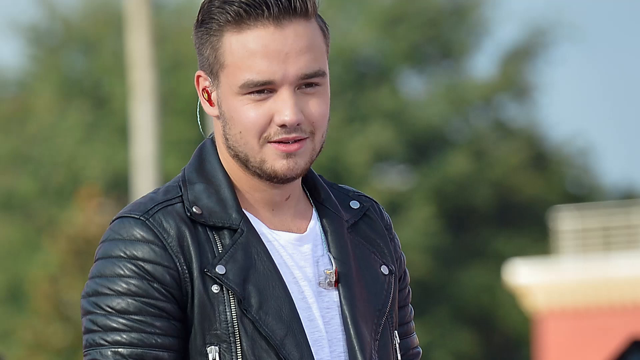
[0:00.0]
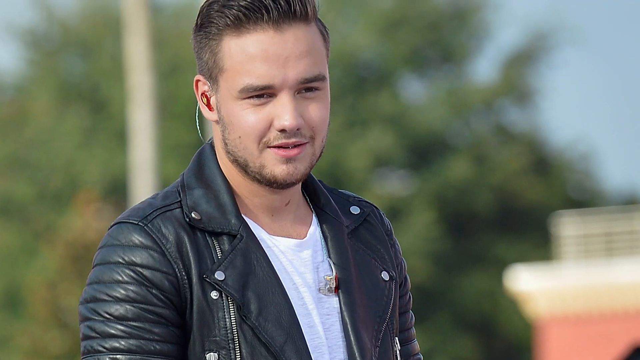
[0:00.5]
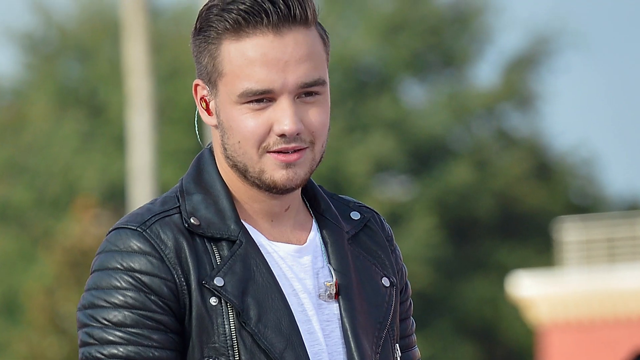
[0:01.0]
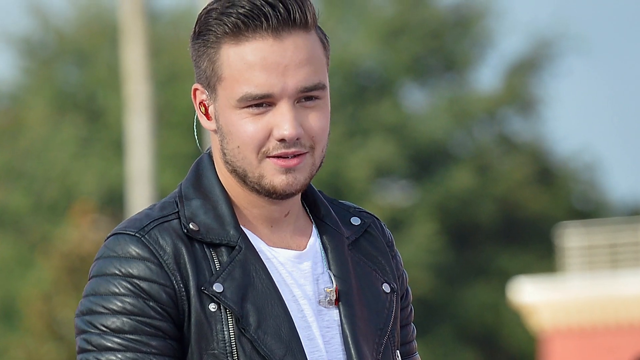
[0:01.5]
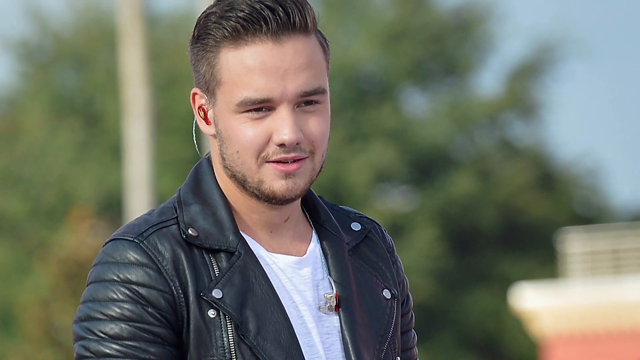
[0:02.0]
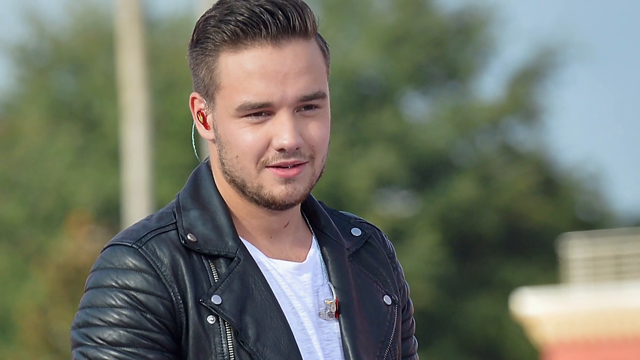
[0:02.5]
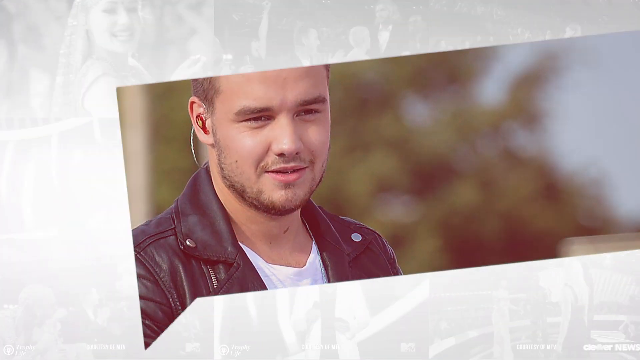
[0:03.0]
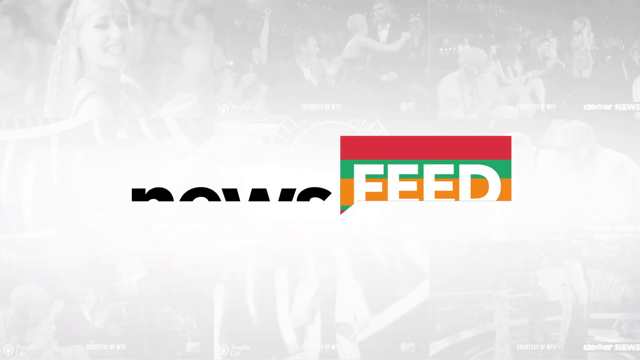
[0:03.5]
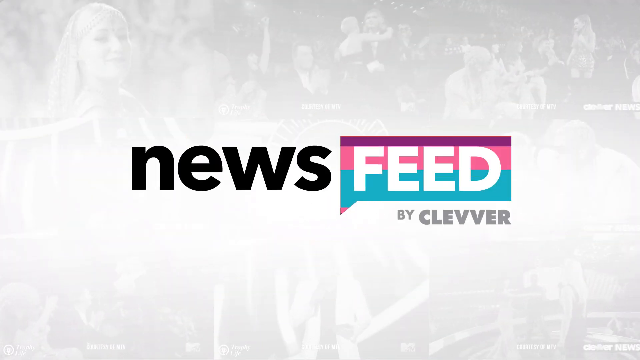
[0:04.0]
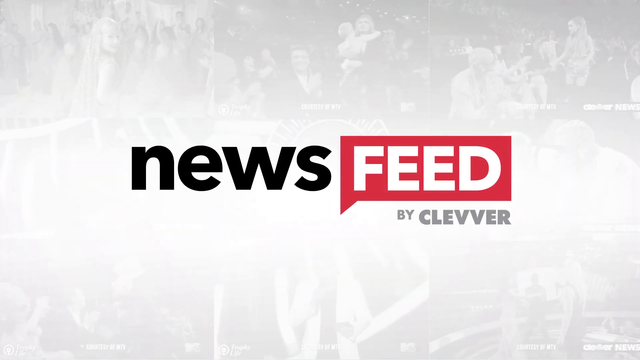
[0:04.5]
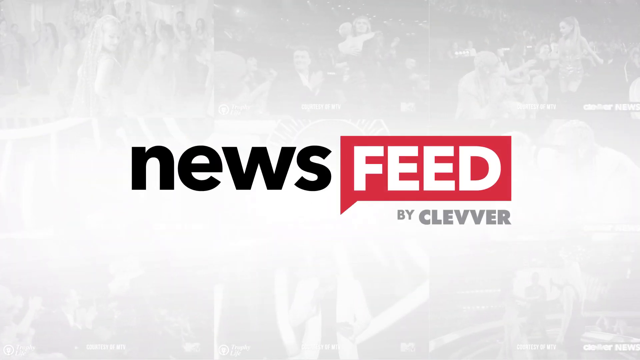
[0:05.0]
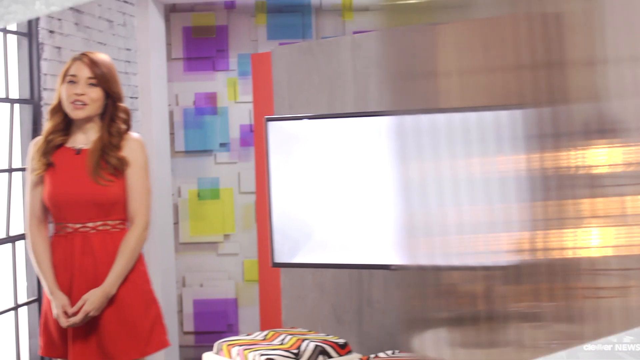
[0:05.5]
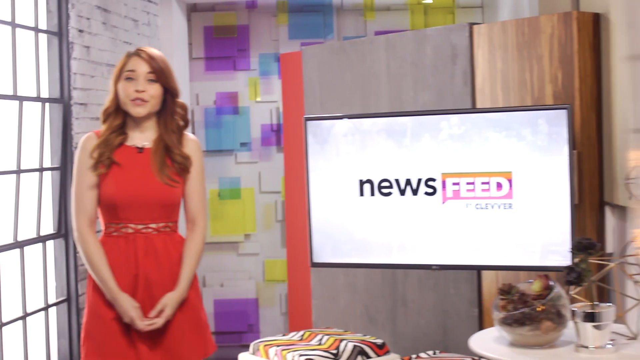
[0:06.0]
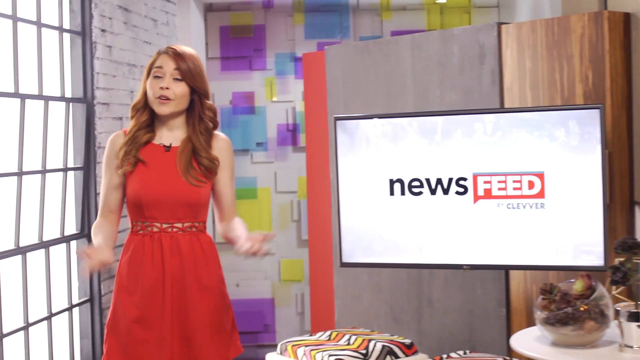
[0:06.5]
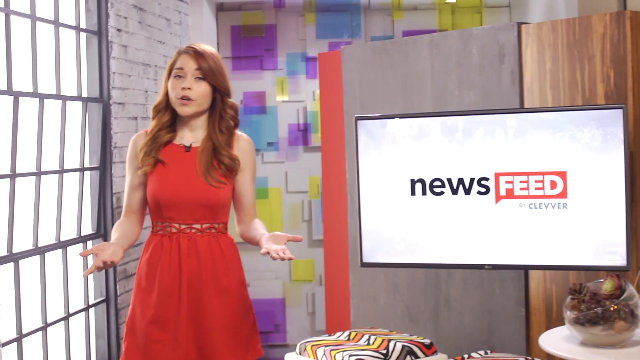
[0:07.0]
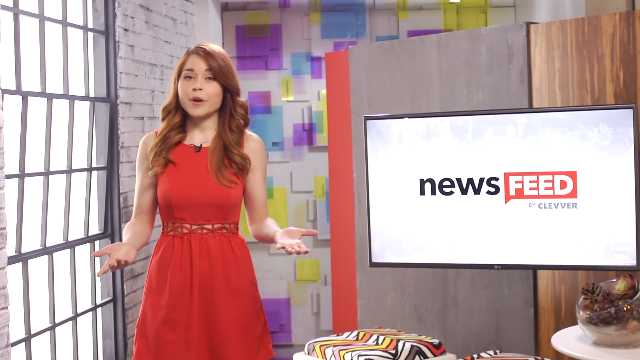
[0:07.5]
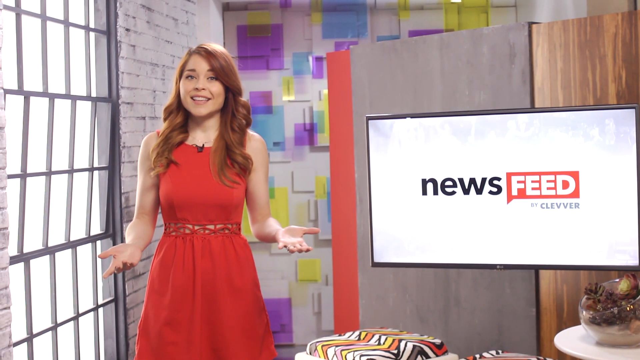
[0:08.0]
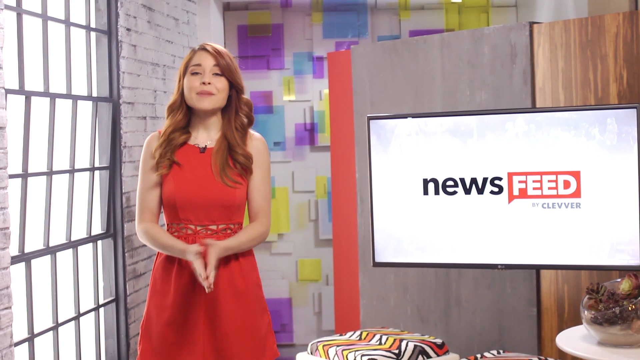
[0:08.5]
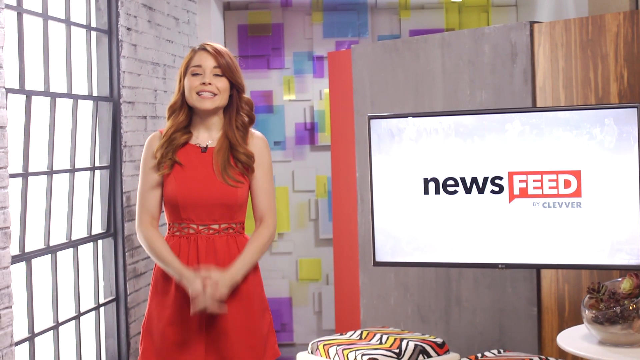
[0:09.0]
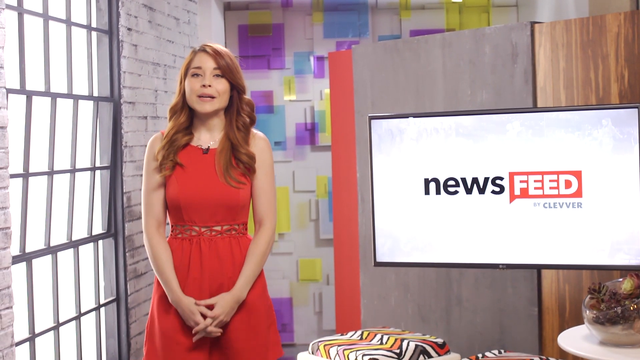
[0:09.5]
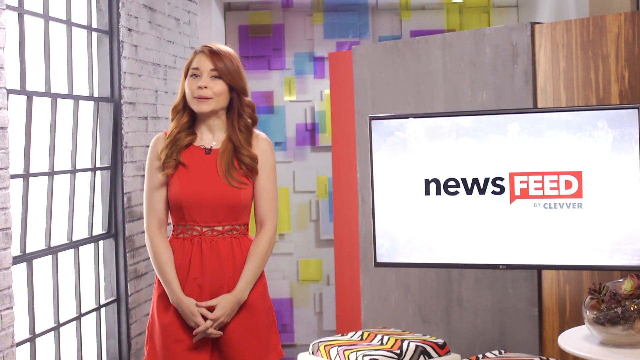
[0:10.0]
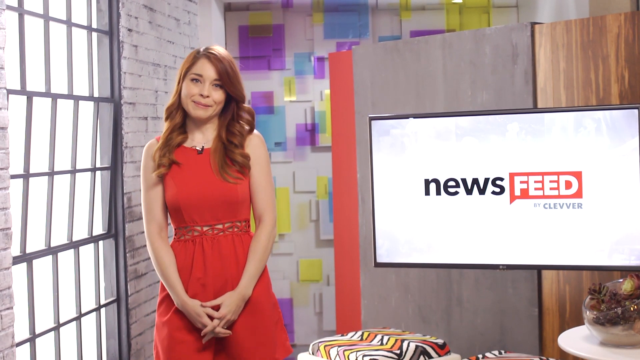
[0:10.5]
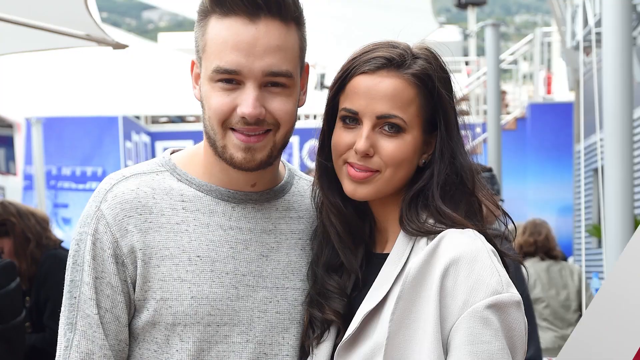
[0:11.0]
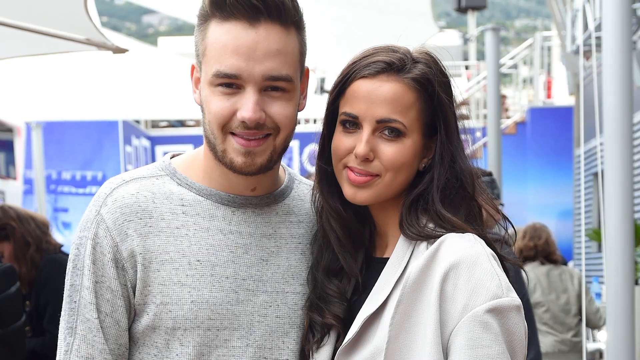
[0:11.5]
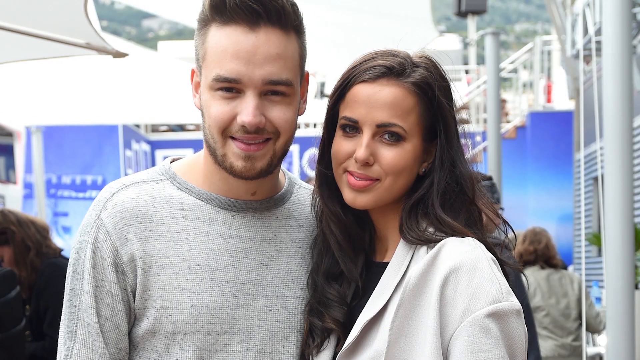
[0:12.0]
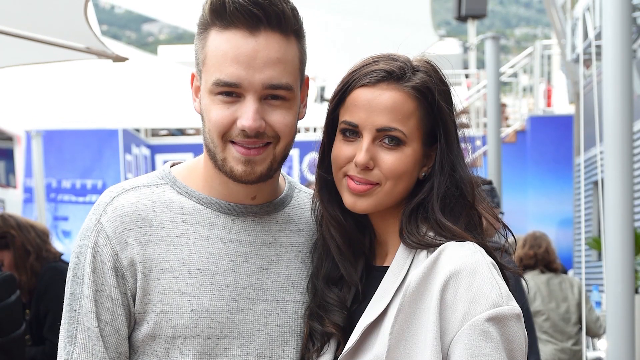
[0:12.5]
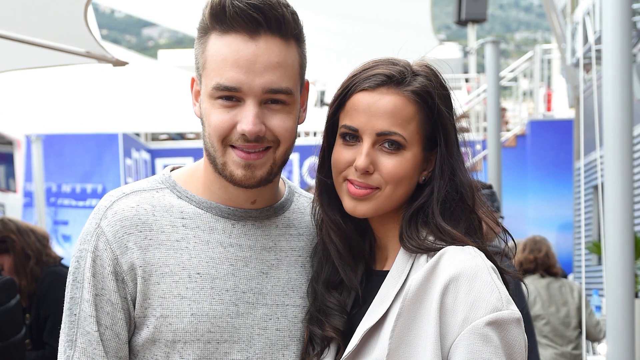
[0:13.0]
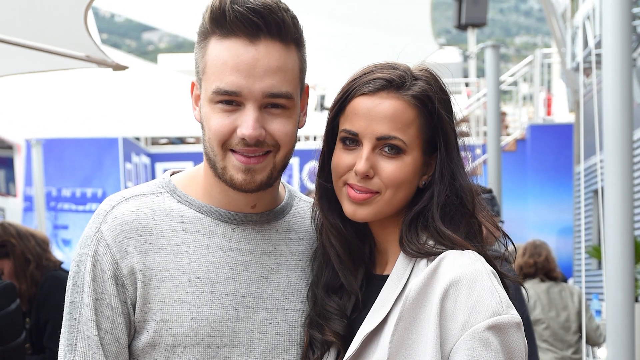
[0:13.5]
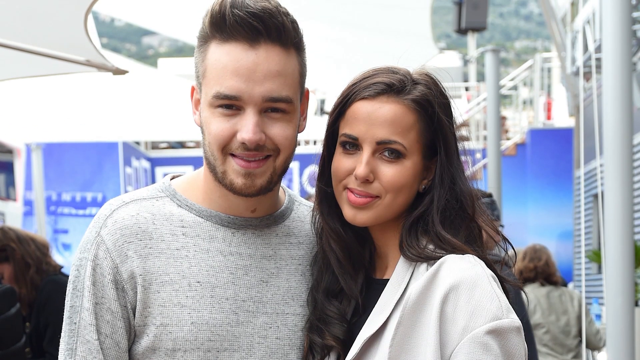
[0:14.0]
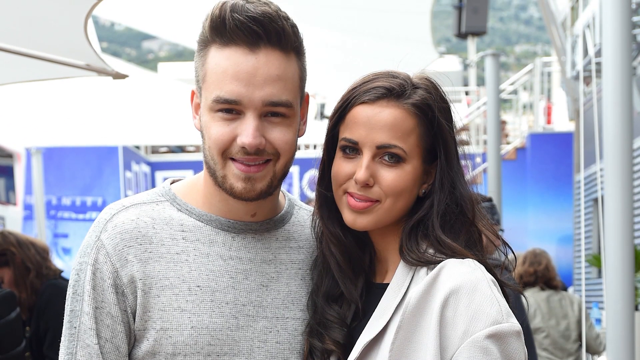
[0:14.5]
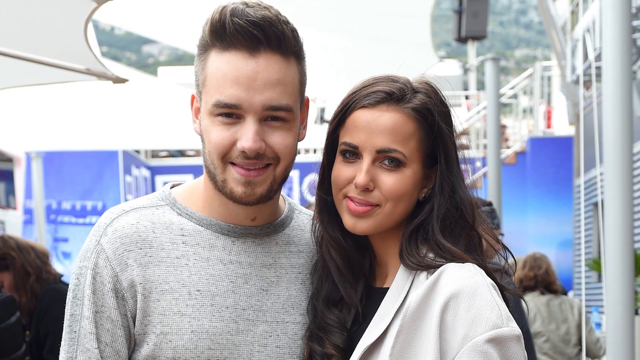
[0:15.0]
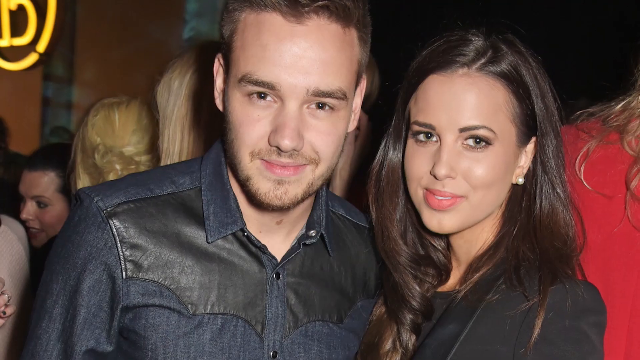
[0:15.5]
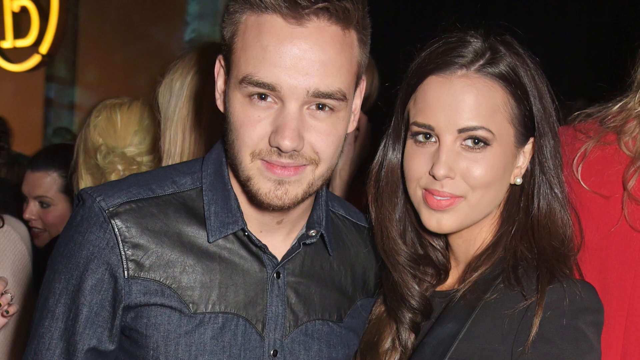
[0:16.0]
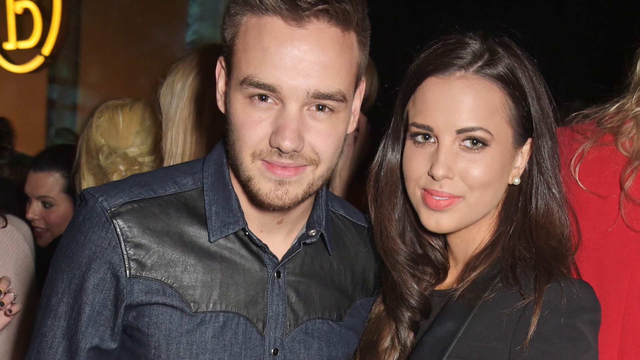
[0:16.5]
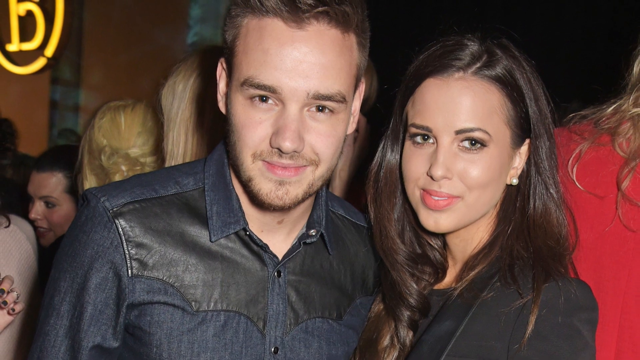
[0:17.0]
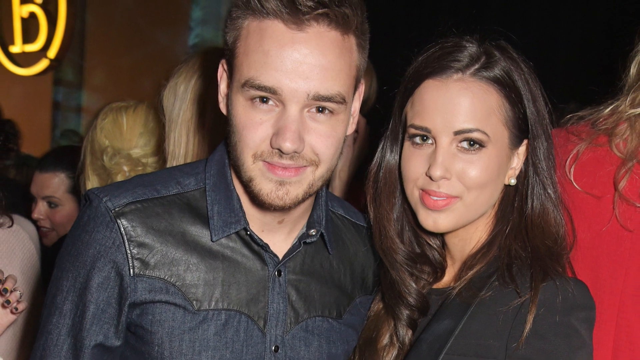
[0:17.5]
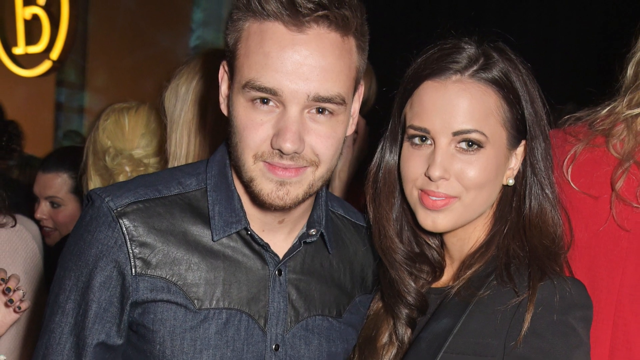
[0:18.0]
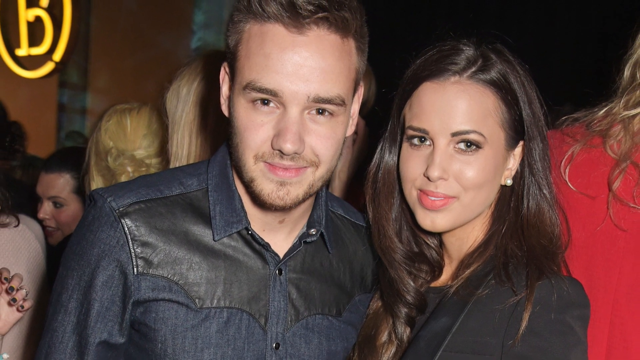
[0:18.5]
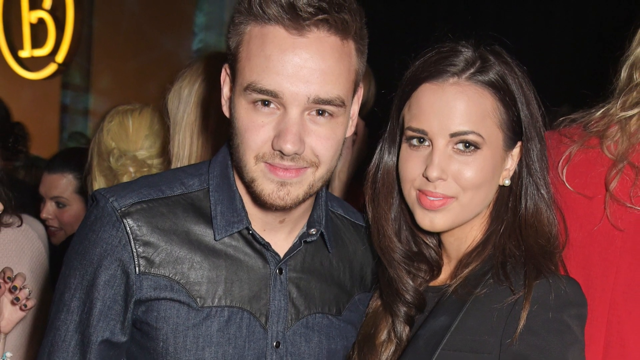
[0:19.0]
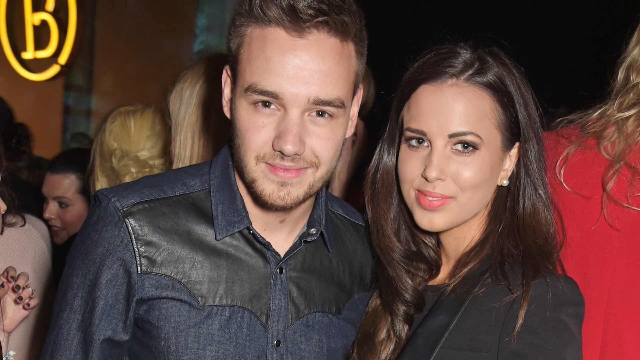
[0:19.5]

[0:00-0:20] A white man with dark brown hair wears a black leather jacket with a white shirt. The background behind him is dim, and there is a big tree behind him. The video changes to white and black text reading "News Feed by Clever" on a white background, which also shows people against a dim background. It then changes to a News Feed news reporter, a lady in a red dress with long brown hair. The background behind her shows windows, a cupboard at the back, and posters or papers pasted on the wall in different colors such as blue, yellow and purple.